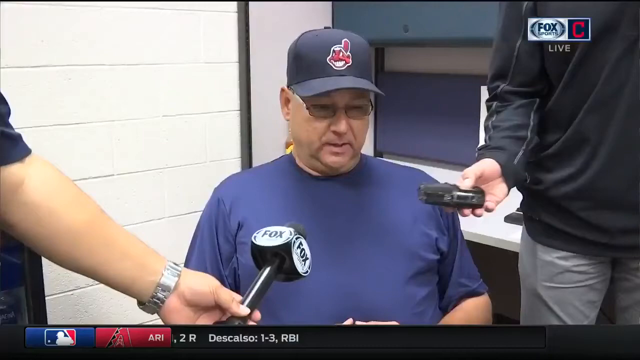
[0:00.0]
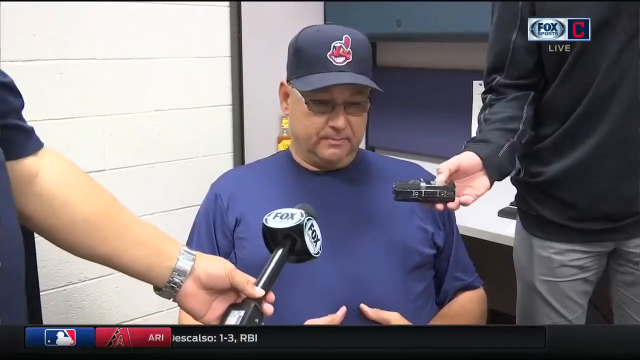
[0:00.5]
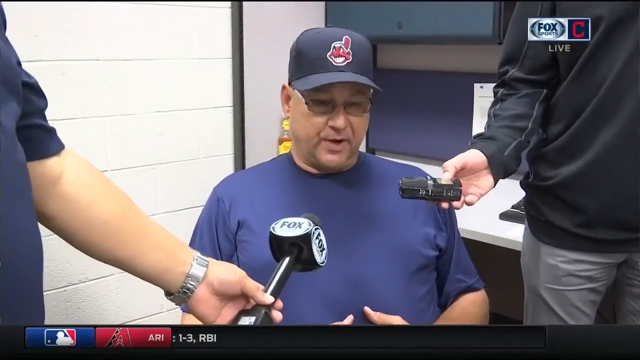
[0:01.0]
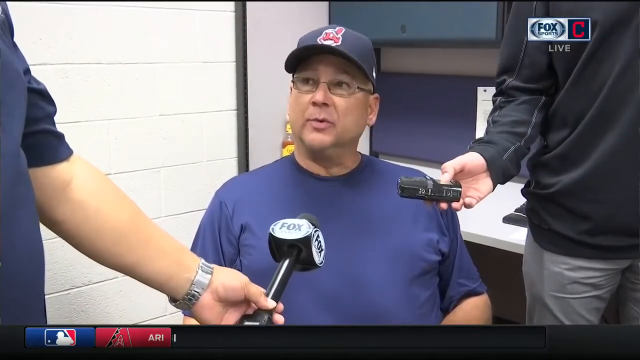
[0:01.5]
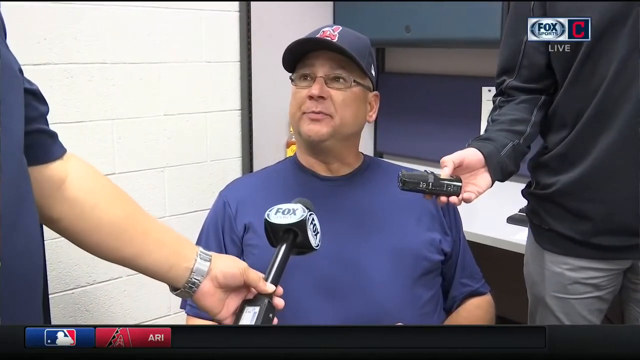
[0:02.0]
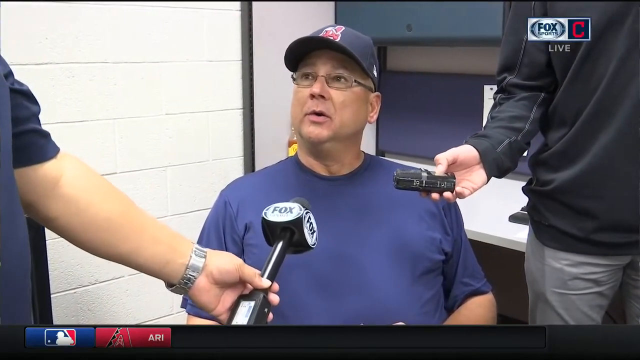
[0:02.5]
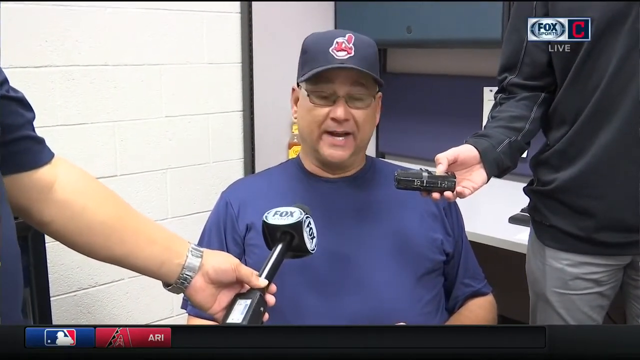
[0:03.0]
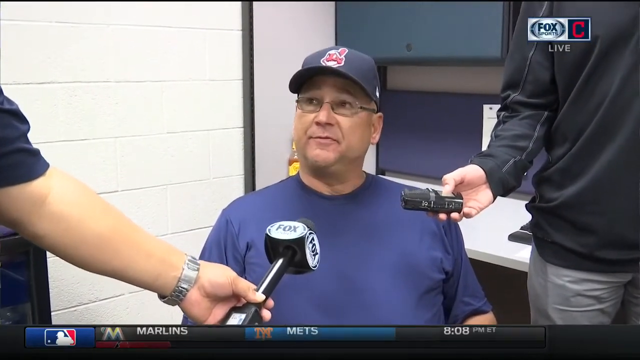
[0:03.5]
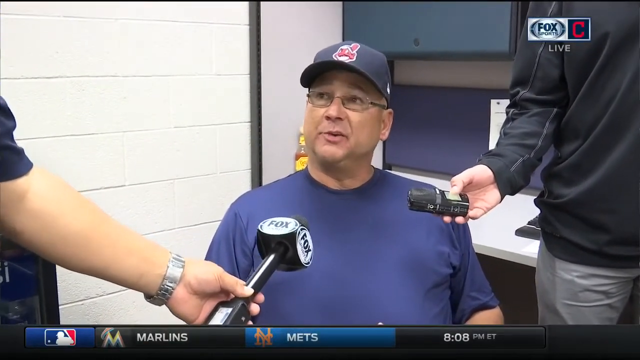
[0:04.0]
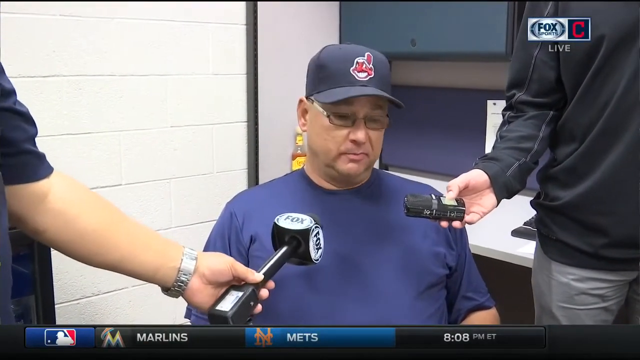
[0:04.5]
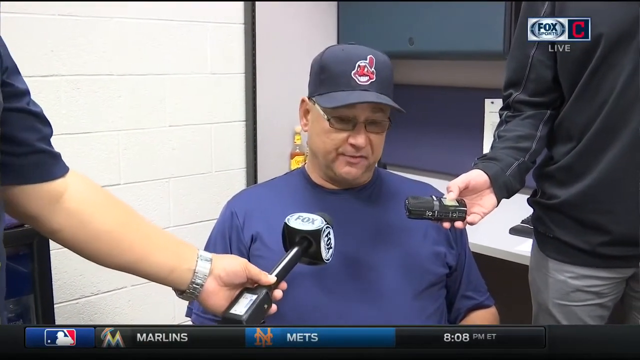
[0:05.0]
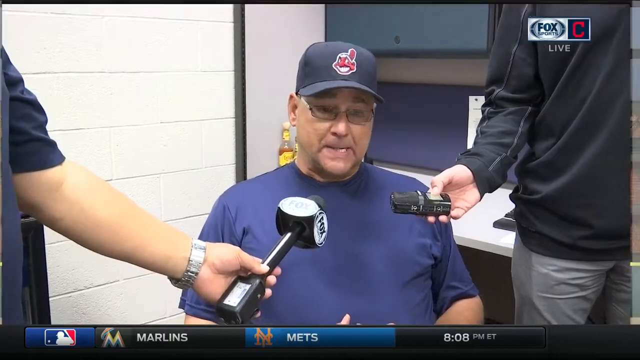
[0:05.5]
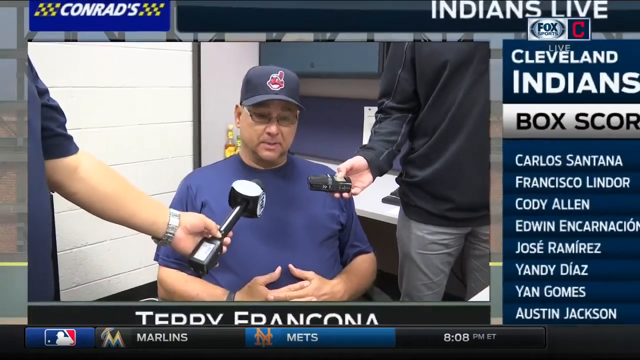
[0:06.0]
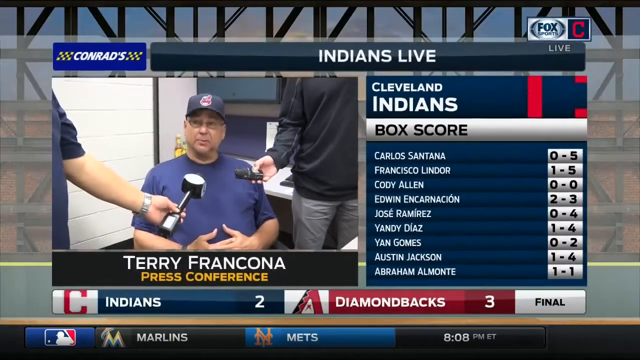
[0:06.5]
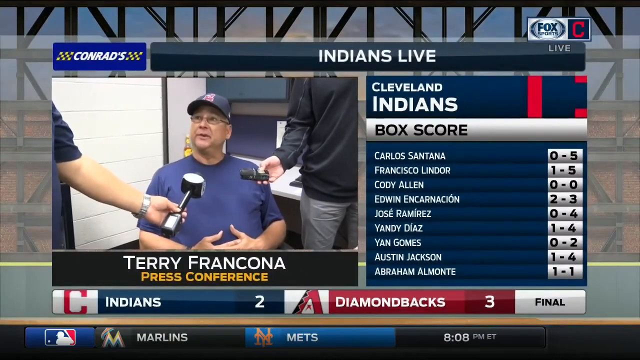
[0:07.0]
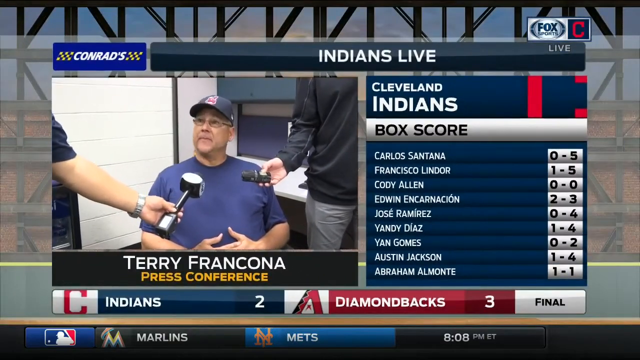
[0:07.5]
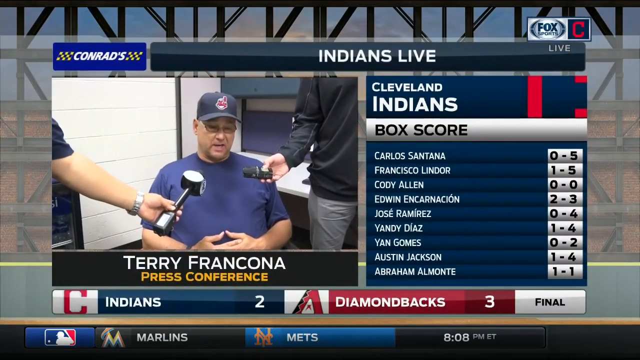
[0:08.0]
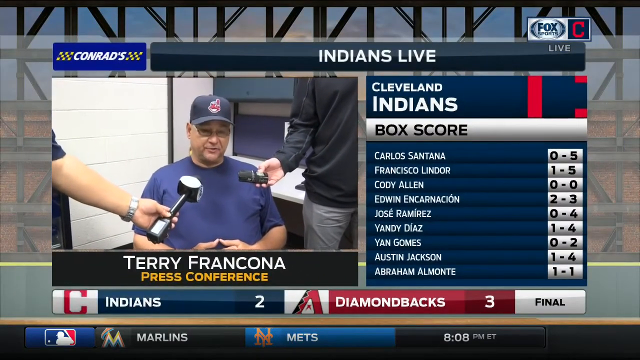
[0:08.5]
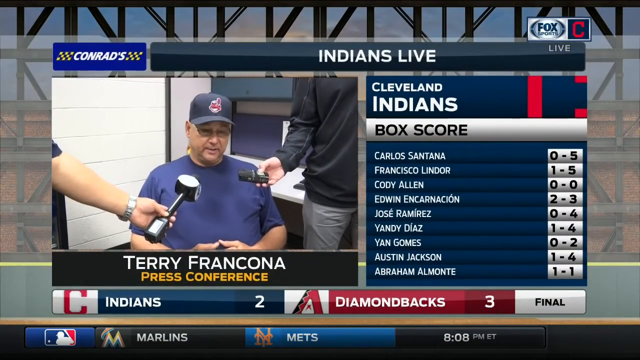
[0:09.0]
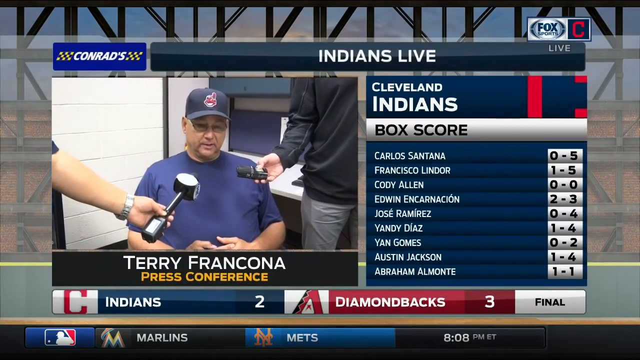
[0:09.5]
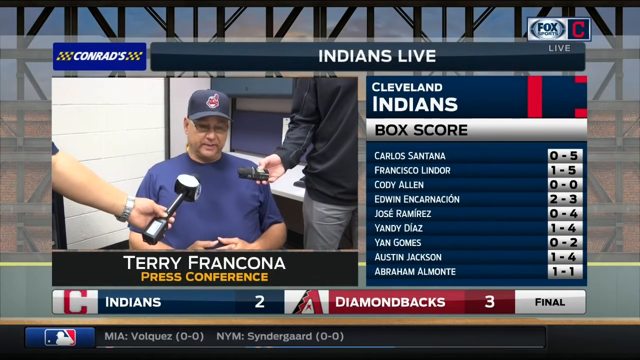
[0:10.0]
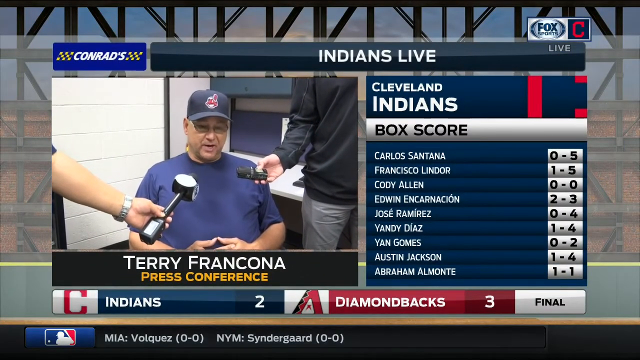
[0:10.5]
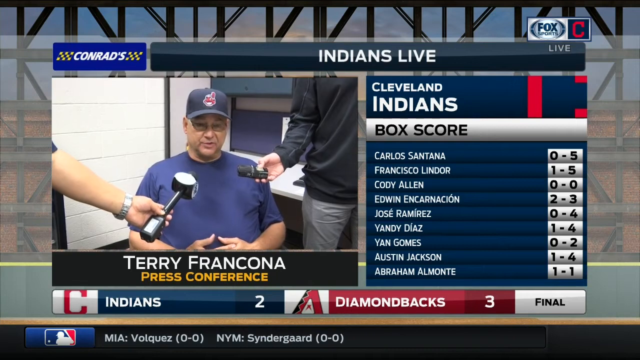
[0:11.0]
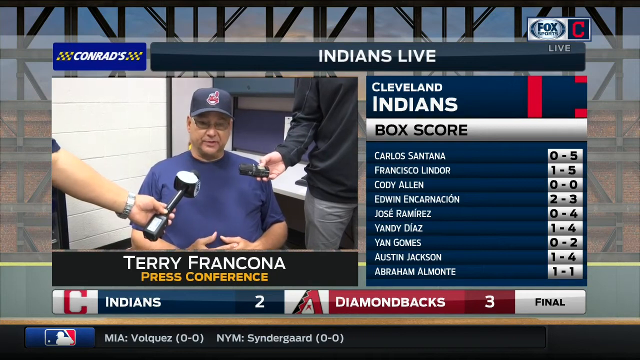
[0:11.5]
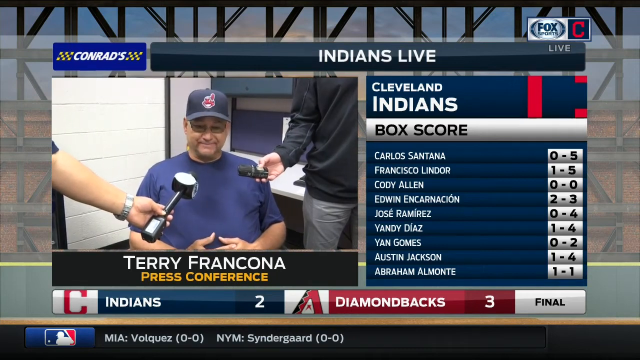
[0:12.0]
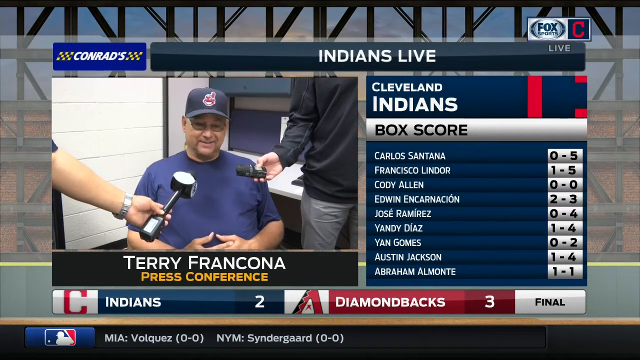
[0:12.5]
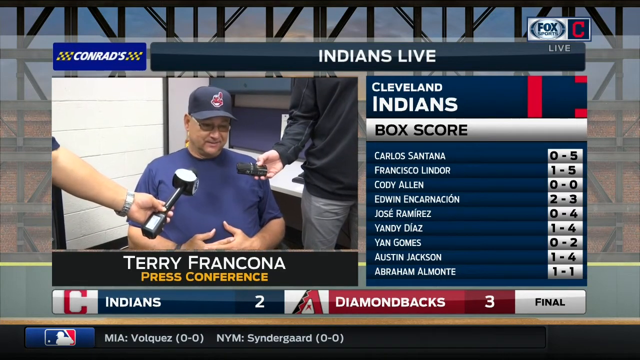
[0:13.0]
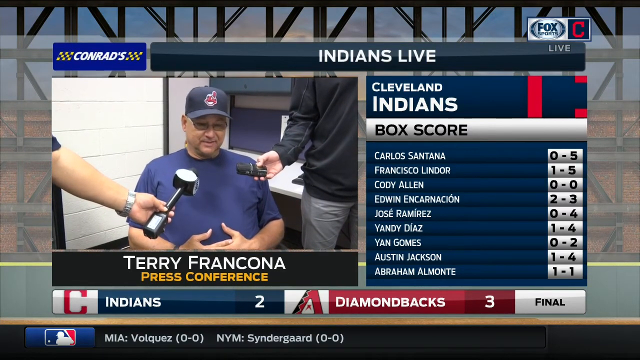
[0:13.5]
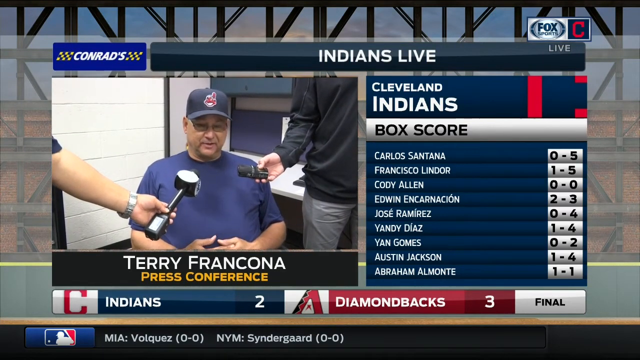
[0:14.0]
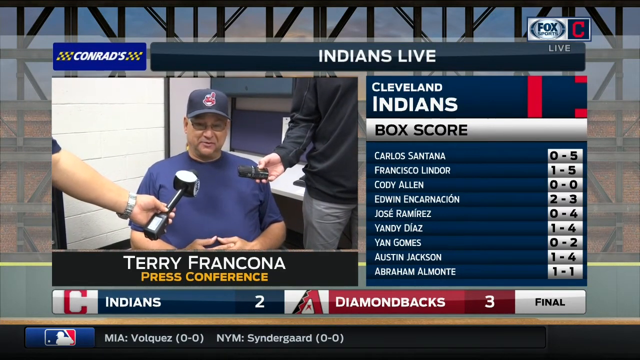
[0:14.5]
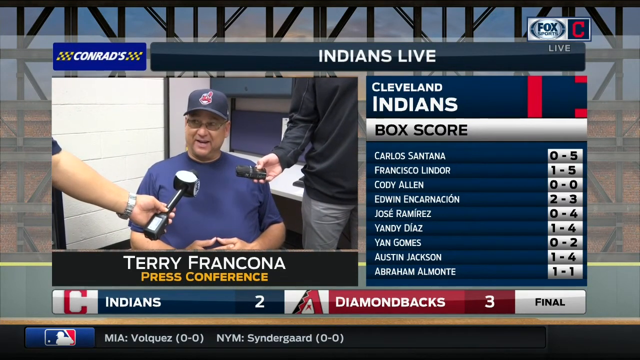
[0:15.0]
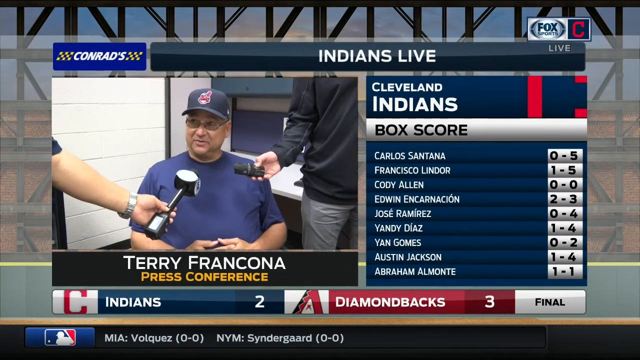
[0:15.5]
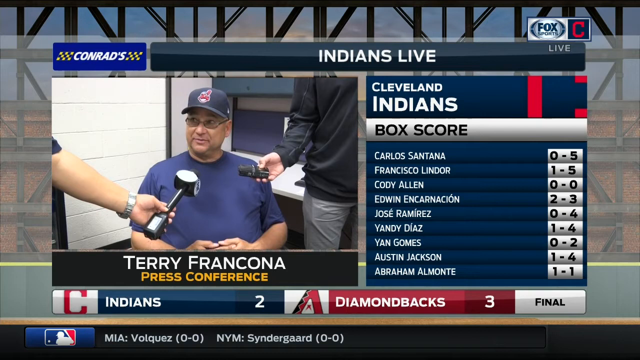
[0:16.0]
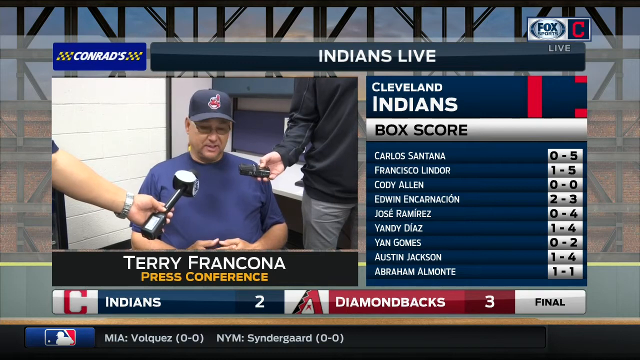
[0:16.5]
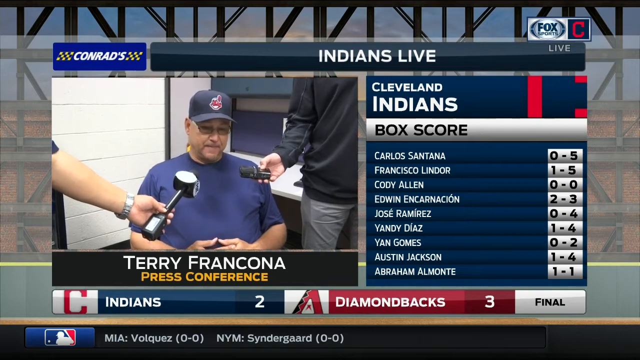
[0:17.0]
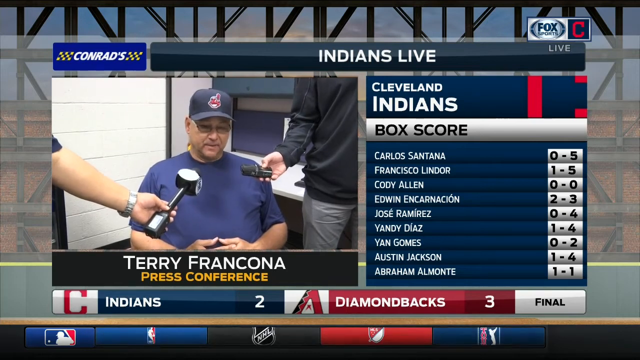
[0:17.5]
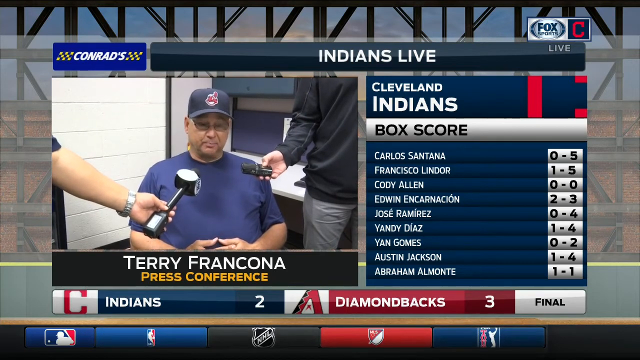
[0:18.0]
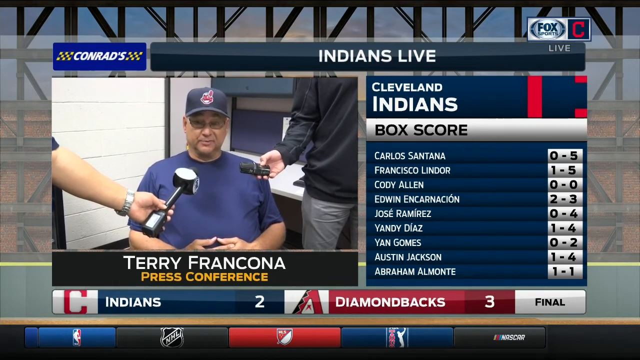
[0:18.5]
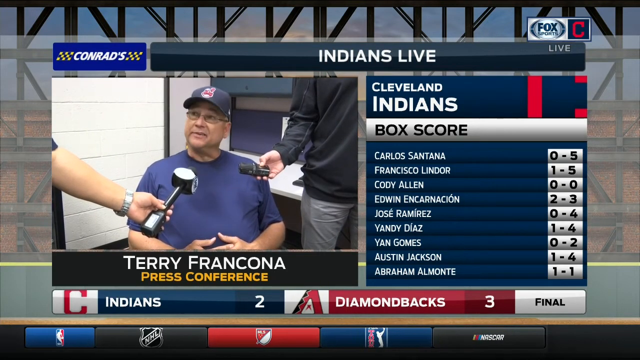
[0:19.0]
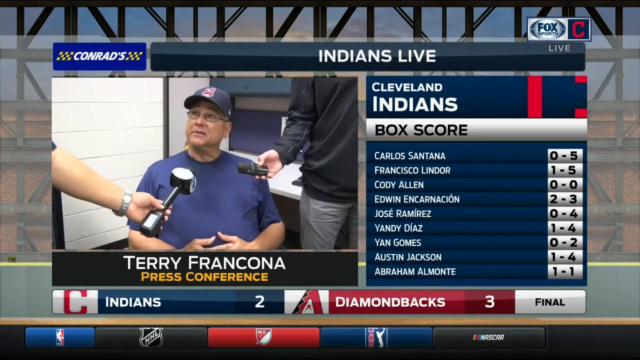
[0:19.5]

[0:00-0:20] Terry Francona, manager of the Indians, is interviewed after the Indians lose a game to the Diamondbacks 3-2. A box score shows Carlos Santana 0 for 5, Francisco Lindor 1 for 5, Cody Allen 0 for 0, Edwin Acarcion 2 for 3, Jose Ramirez 0 for 4, Yandy Diaz 1 for 4, Yan Gomez 0 for 2, Austin Jackson 1 for 4, and Abraham Amante 1 for 1. Francona sits in a chair while reporters hold out microphones: a big one that looks like a five-pound weight and a smaller one that looks about the size of a computer mouse. He twiddles his thumbs and fingers as he answers questions about the game. He looks down, then looks up to answer.